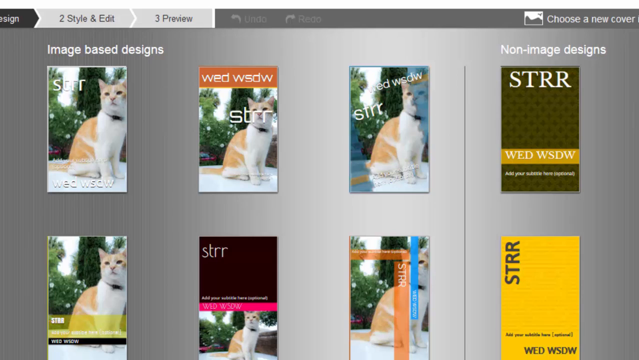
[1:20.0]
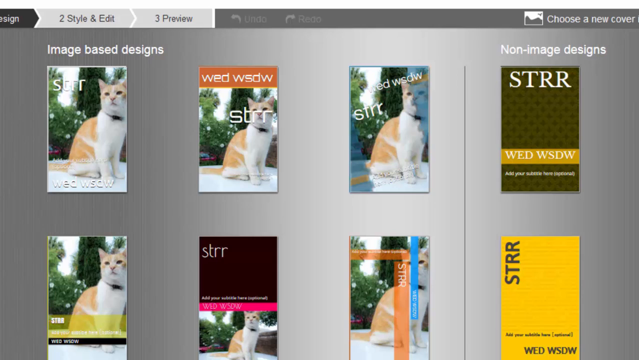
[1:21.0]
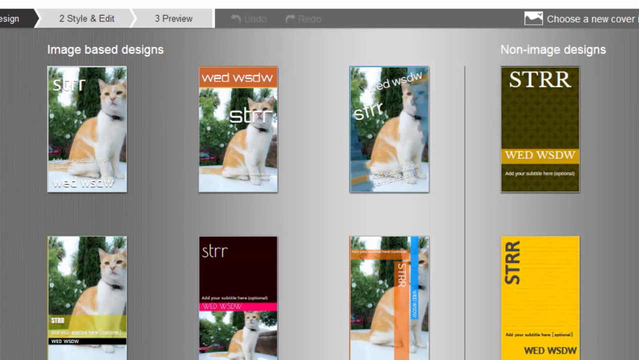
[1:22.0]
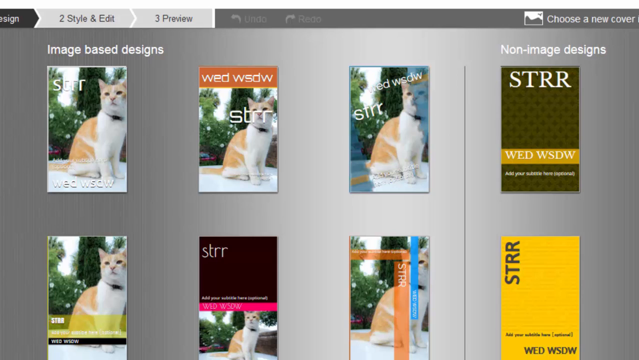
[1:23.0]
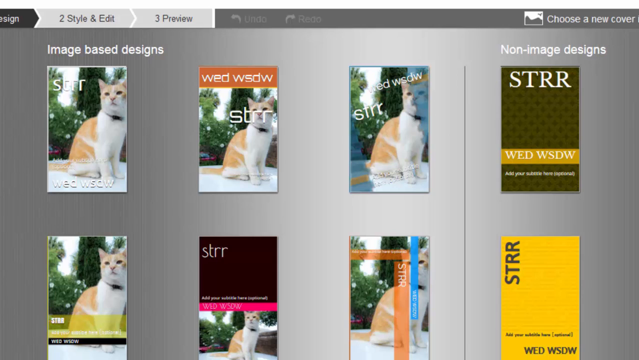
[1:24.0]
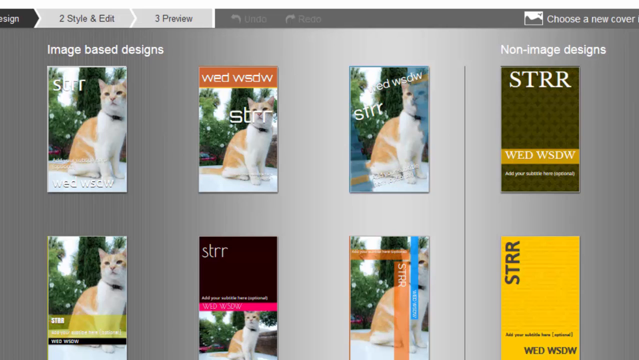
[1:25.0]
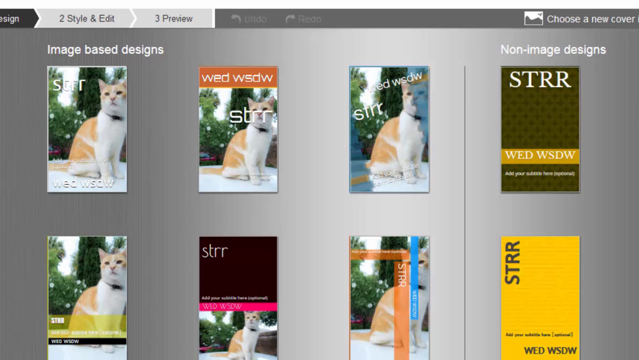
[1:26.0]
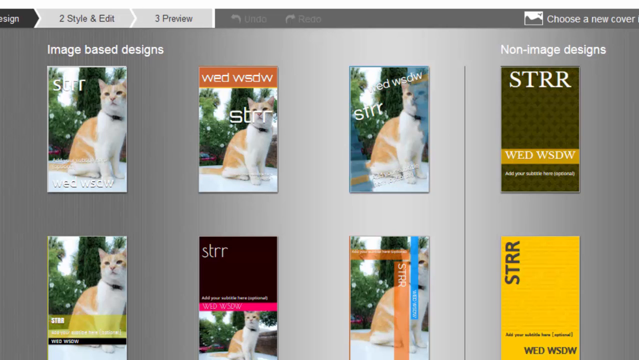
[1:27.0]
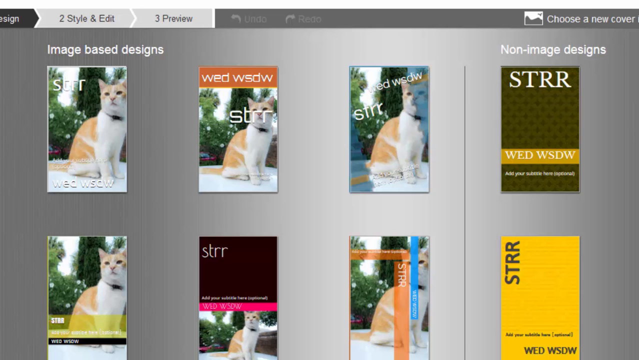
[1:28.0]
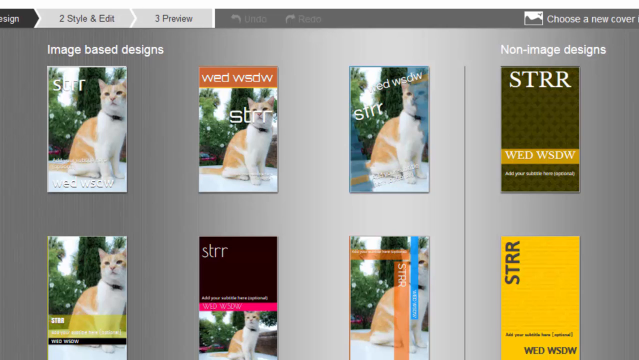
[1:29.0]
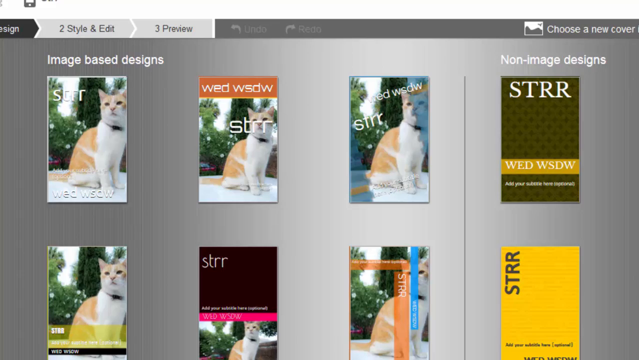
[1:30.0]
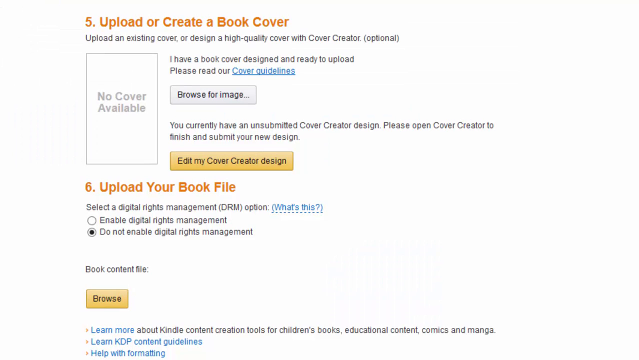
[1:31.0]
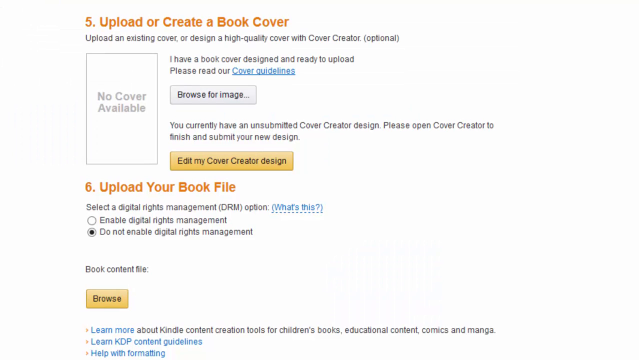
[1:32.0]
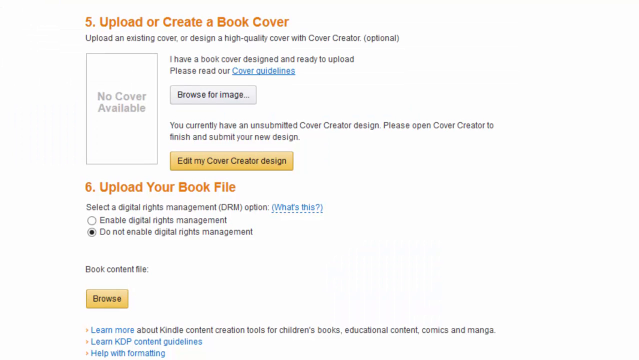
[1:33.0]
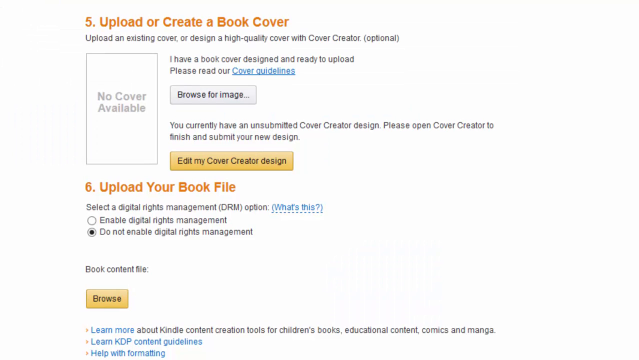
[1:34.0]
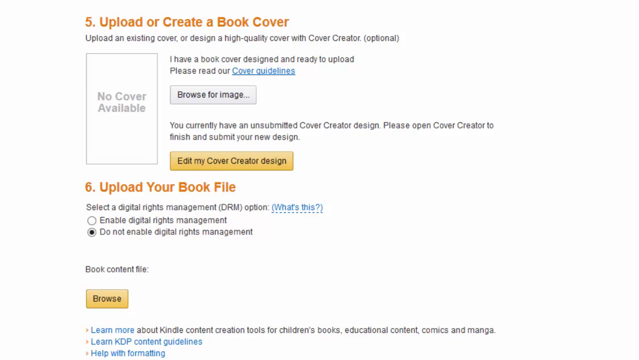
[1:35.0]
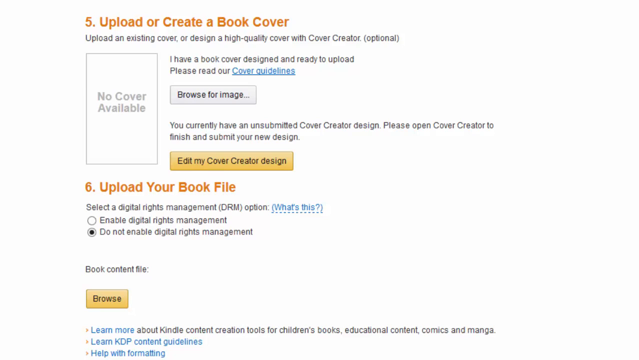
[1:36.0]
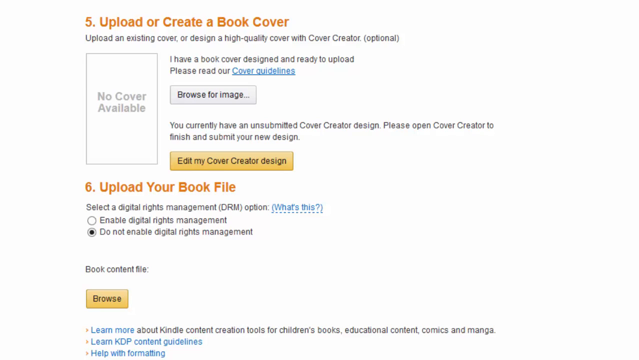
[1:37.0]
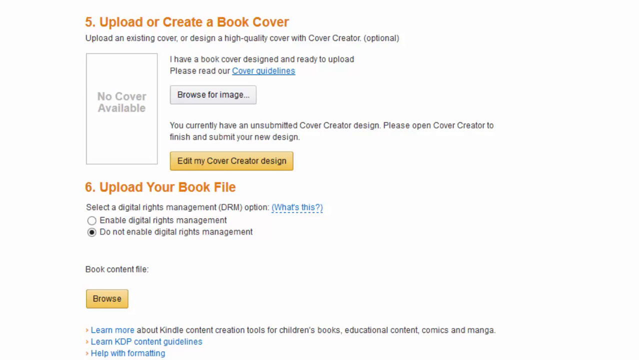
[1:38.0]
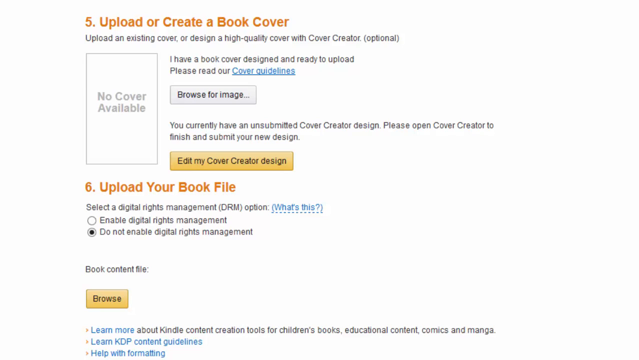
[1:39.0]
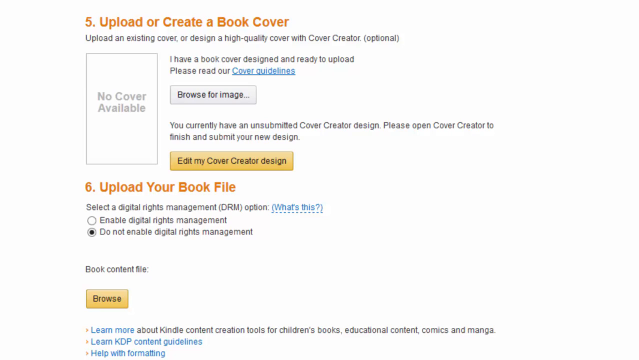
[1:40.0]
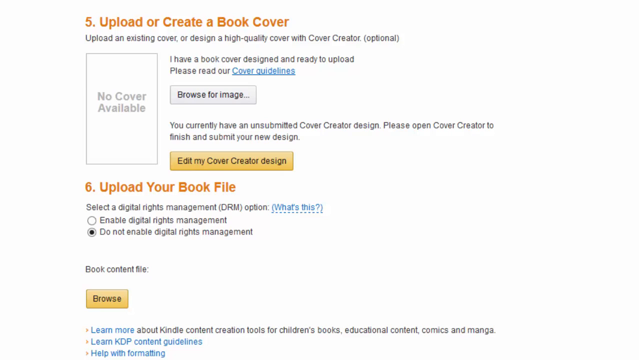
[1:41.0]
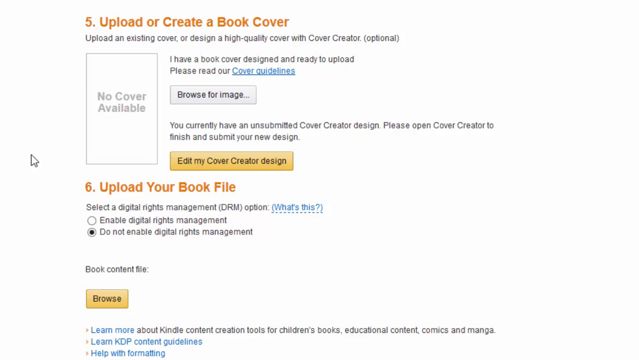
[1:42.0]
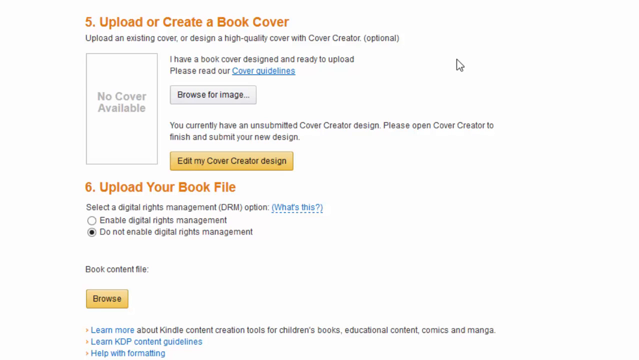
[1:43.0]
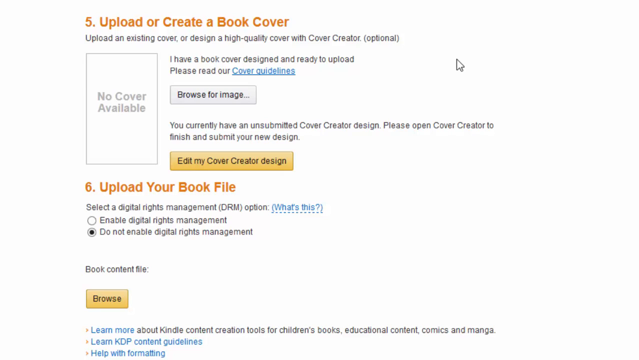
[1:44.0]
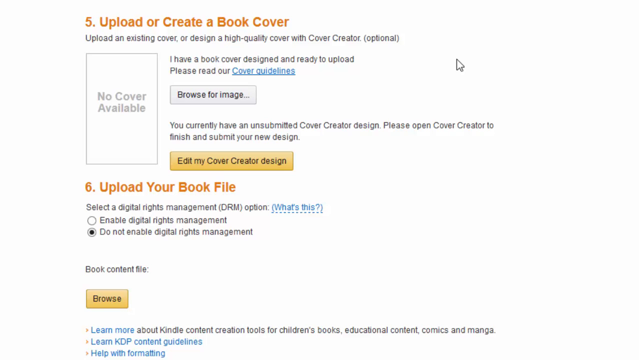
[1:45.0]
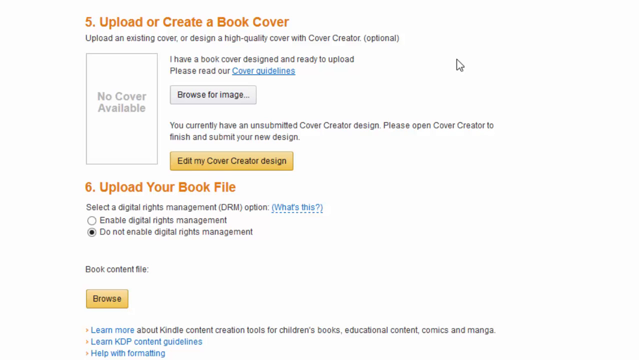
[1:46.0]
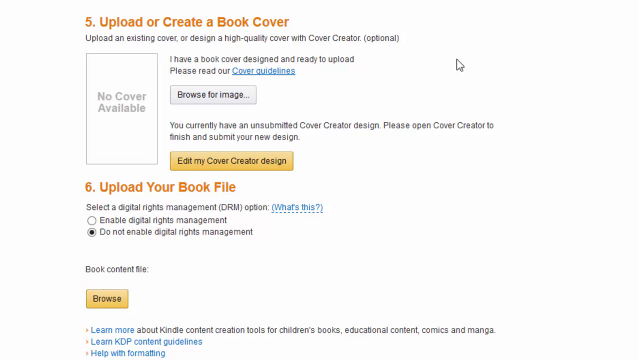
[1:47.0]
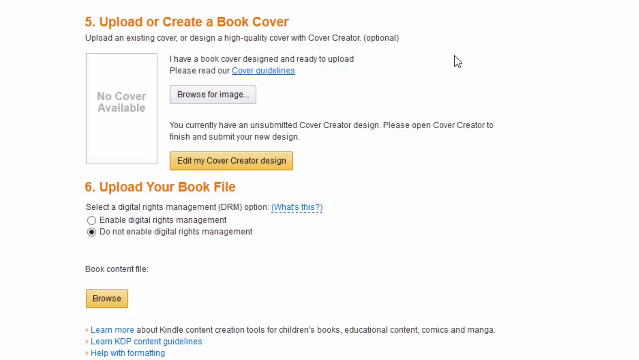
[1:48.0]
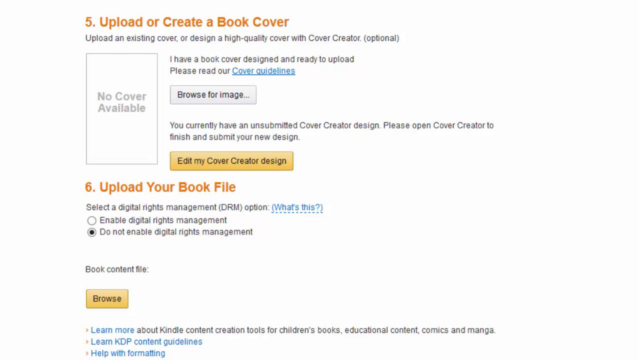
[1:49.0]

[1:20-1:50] The page of image-based designs and non-image designs, with the cat image overlaid on the book covers, stays on screen for quite a while. On the left are six book covers with different fonts and banners. The page floats down briefly, then cuts back to the original text page with "upload or create a book cover". This time the center reads "you currently have an unsubmitted cover creator design. Please open cover creator to finish and submit your new design", and below that in the center it says "edit my cover creator design". The page is otherwise identical to the first page. It stays for a few seconds with no cursor visible. Then the pointer comes in, quickly moves across the page from left to right, stops in the upper right quadrant and hovers there, then goes up and to the left quickly off the screen. After a few seconds the page changes completely to the Fiverr website, where the pointer quickly clicks on something at the very top of the page.